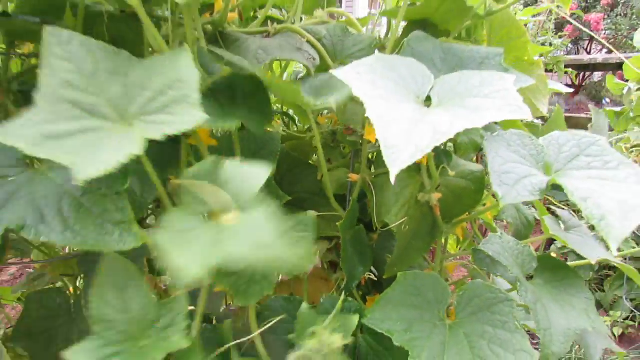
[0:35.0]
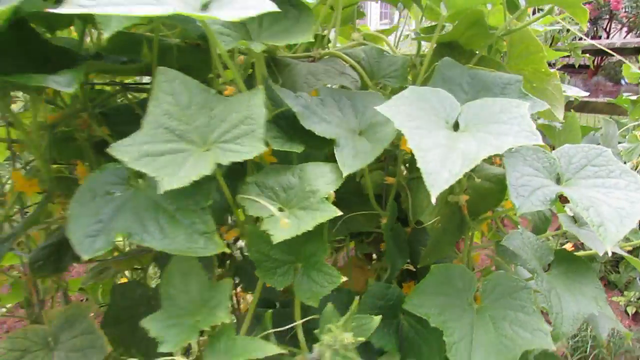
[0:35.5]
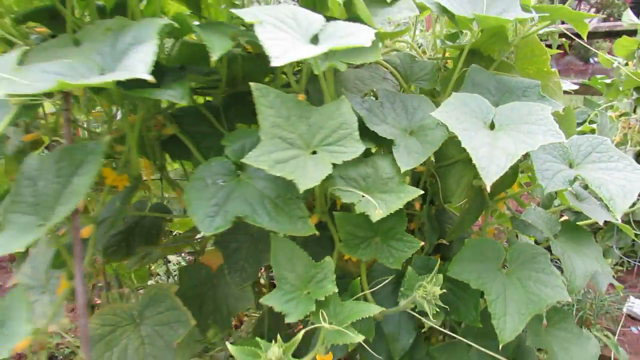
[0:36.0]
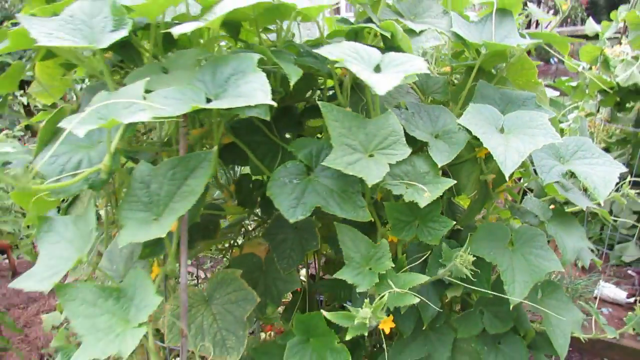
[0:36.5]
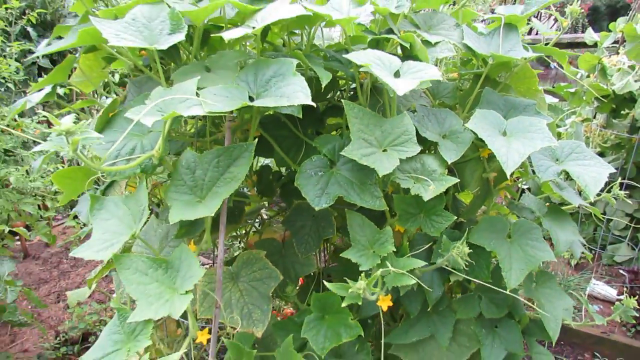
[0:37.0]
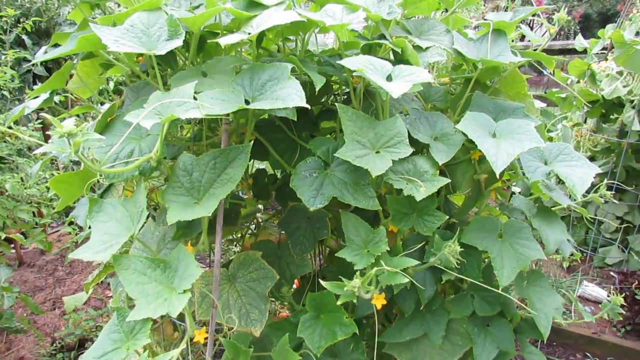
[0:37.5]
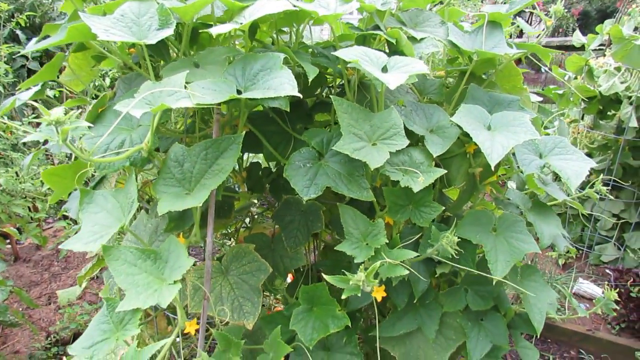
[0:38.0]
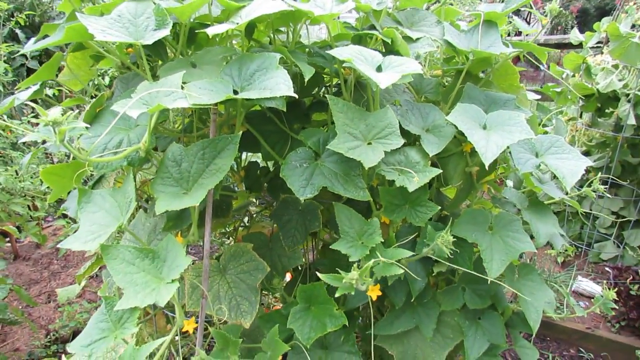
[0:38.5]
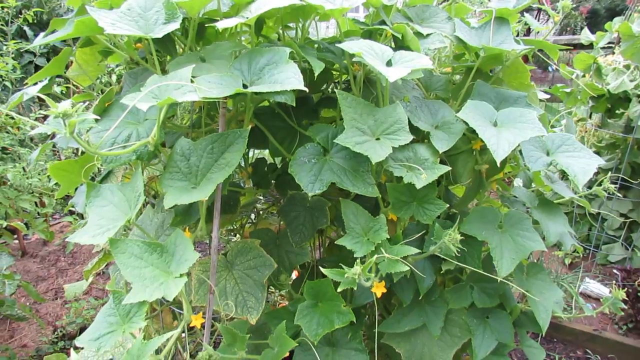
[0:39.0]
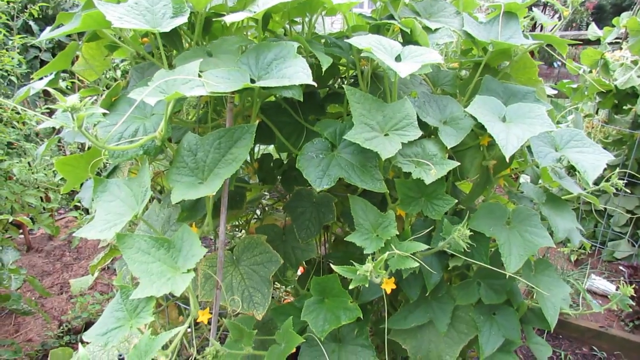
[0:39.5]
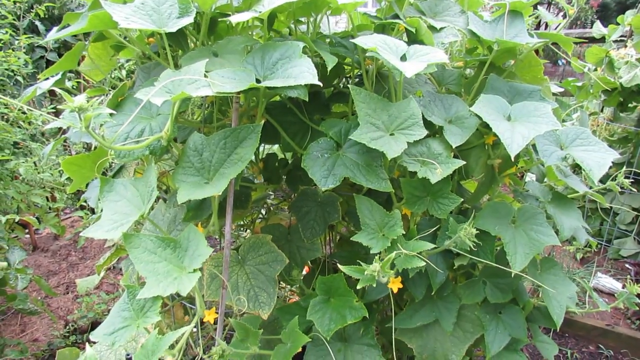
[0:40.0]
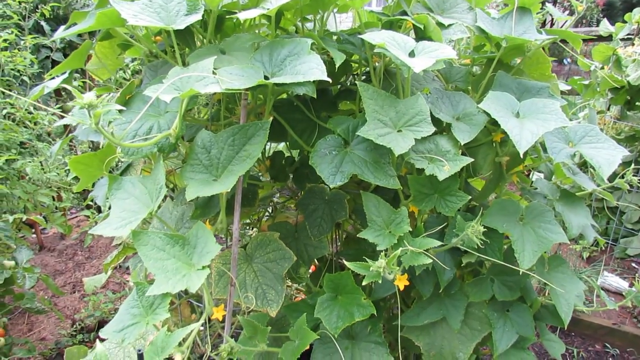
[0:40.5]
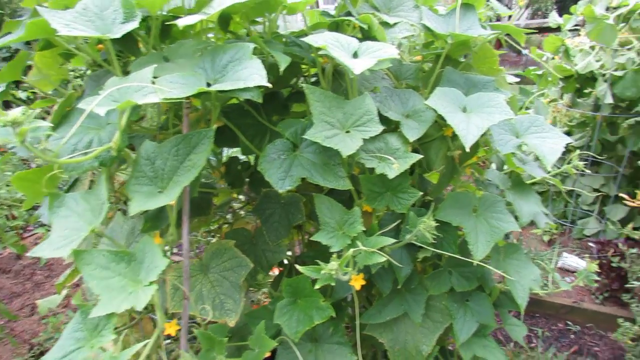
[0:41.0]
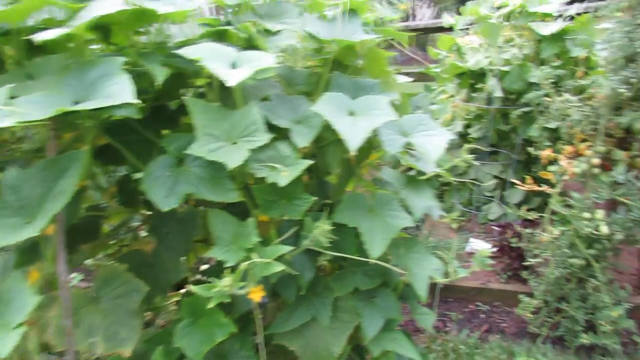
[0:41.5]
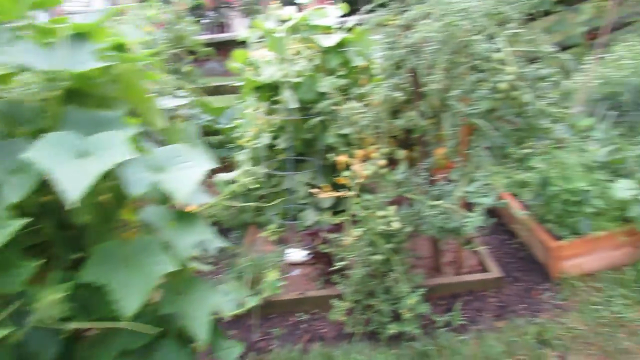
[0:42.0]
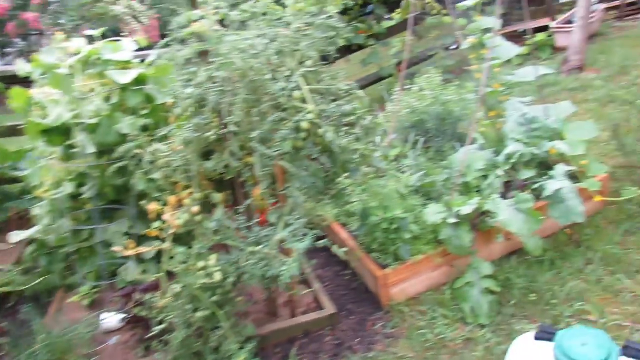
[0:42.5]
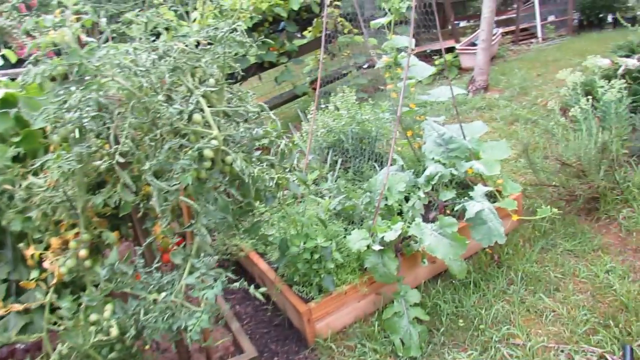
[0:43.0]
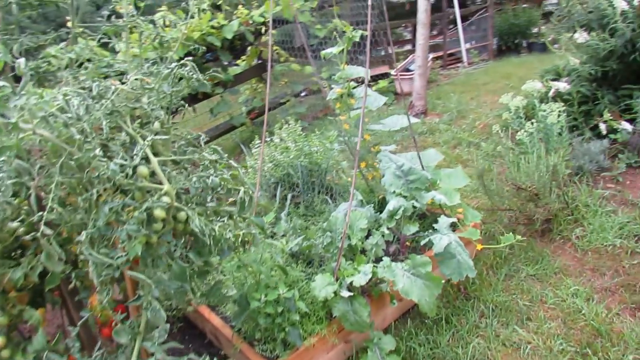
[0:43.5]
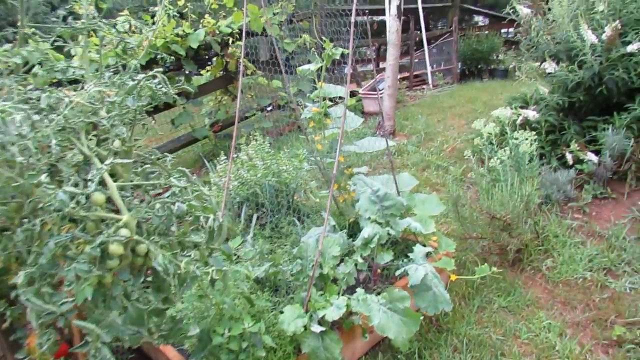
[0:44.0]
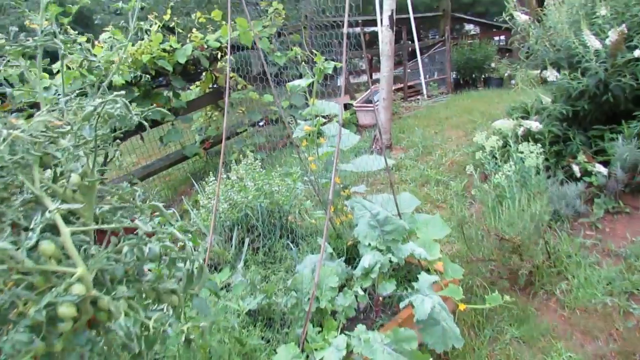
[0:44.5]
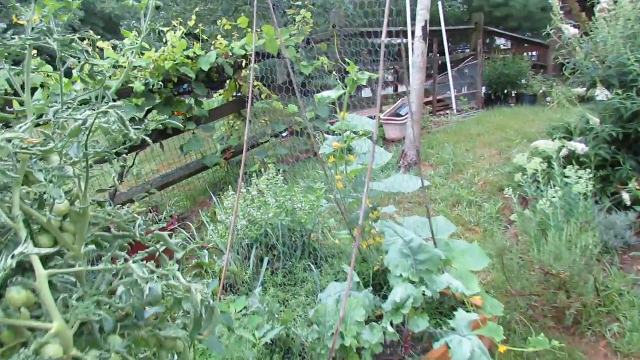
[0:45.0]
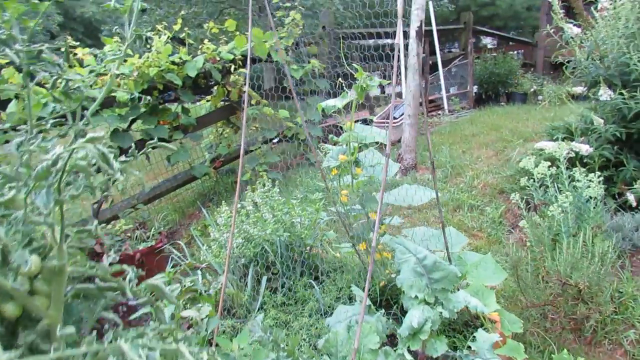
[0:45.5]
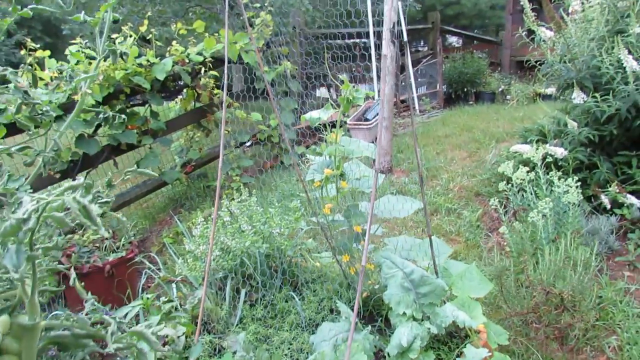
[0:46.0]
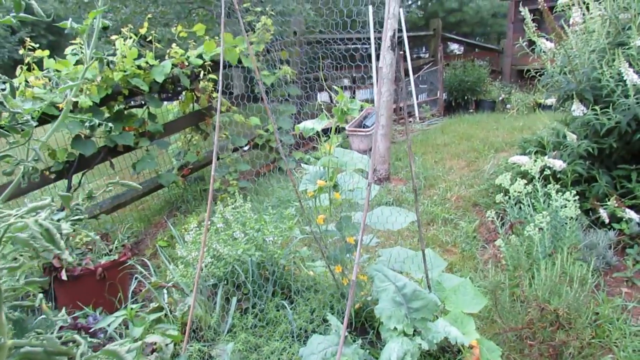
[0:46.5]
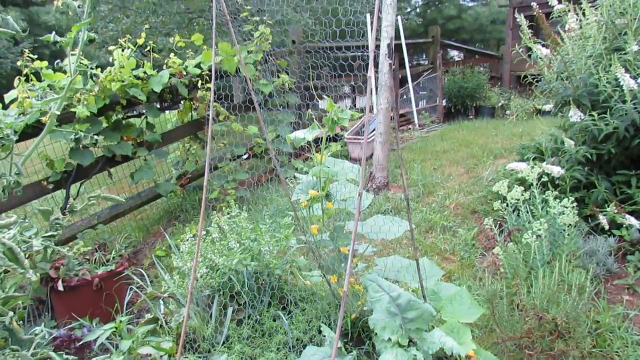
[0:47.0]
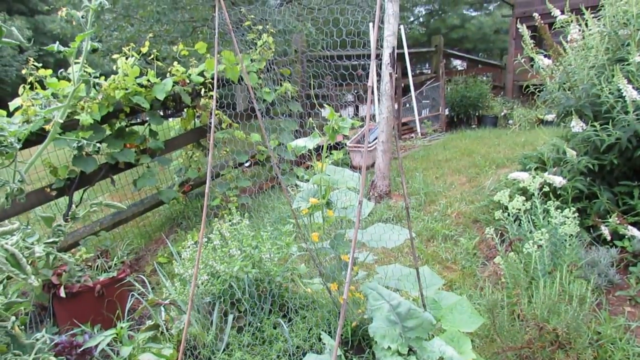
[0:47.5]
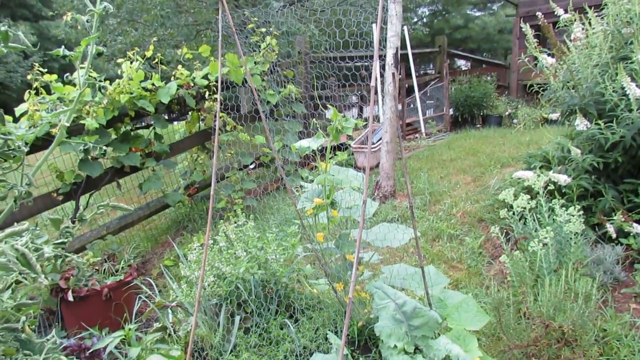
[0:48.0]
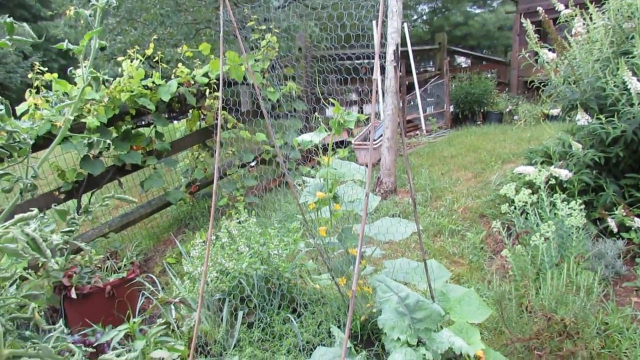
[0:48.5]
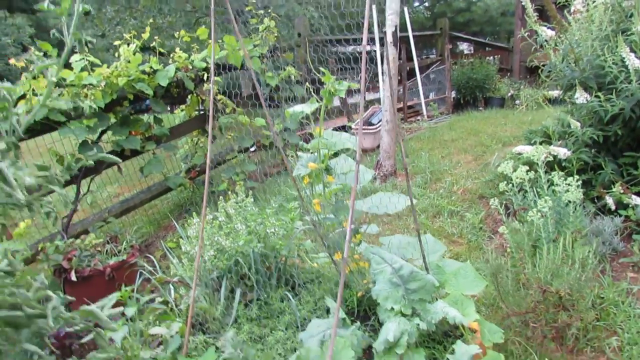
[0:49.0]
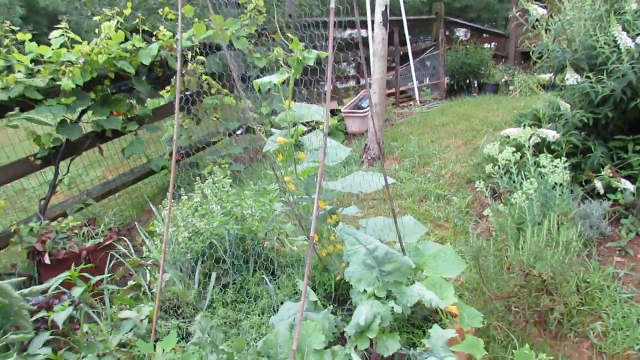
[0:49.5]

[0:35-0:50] The camera pans out from the green bush with yellow flowers in the middle and moves to the right, focusing instead on a mesh or wire type fence. There is some kind of garden bed with plants planted in it and small yellow flowers growing upward along the wire metal fence, which looks like some kind of trellis to help the plant grow upwards. Judging by the camera movement, the person filming appears to turn and walk towards the plant on the right. The rest of the garden is in the background: dirt along the ground, lots of planter boxes filled with different kinds of trees and plants, and at the back some kind of bin that looks like a basin, maybe with some water in it, part of some kind of wooden deck, and some kind of house.